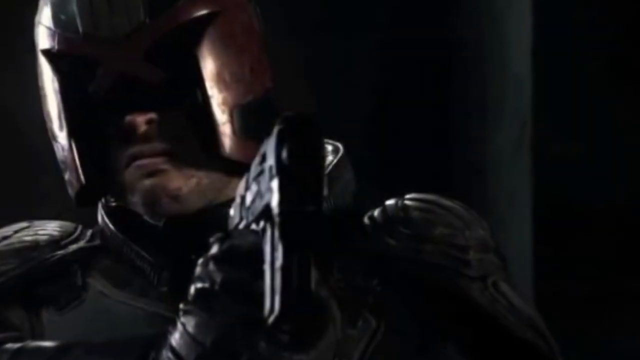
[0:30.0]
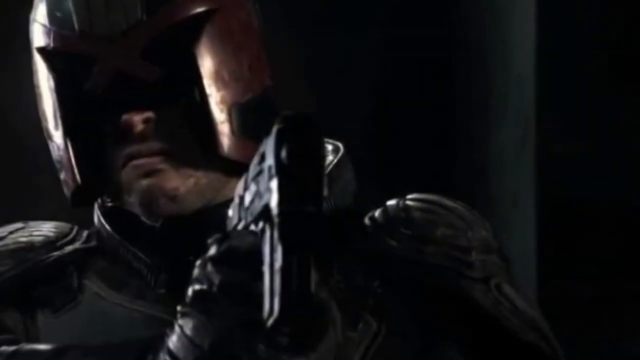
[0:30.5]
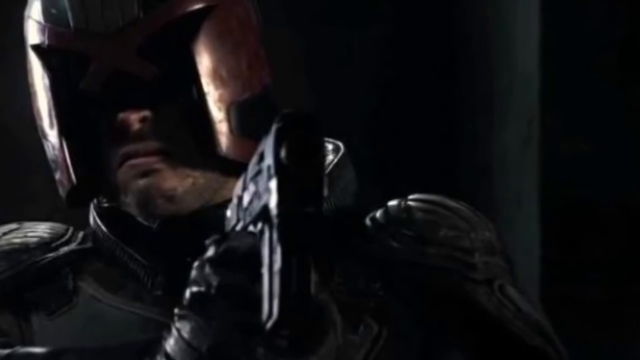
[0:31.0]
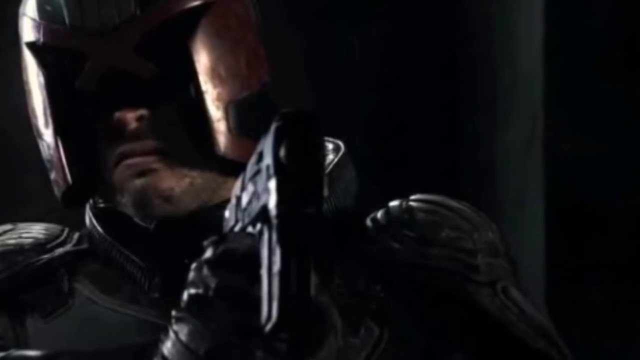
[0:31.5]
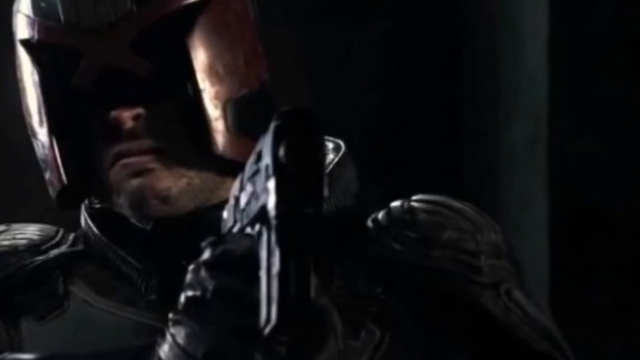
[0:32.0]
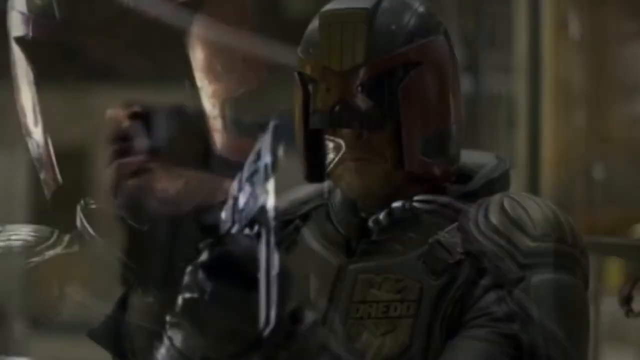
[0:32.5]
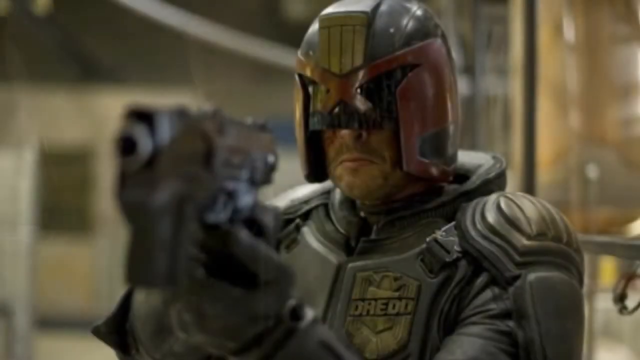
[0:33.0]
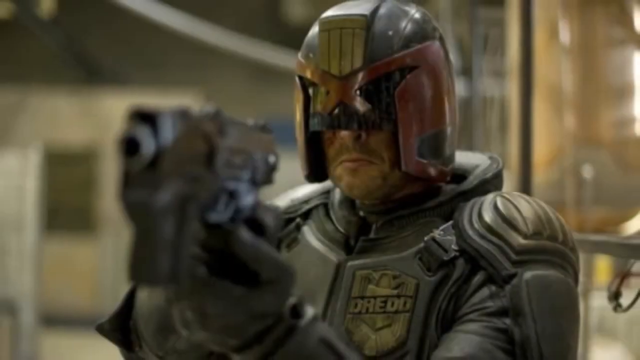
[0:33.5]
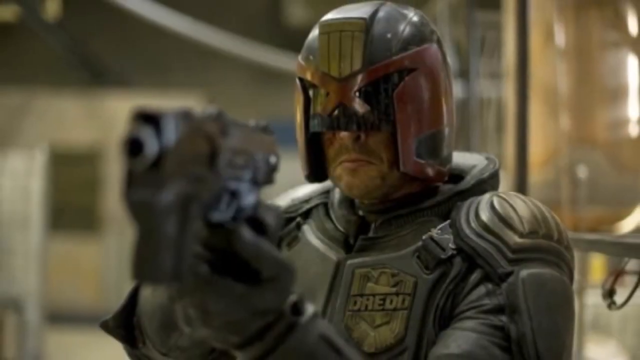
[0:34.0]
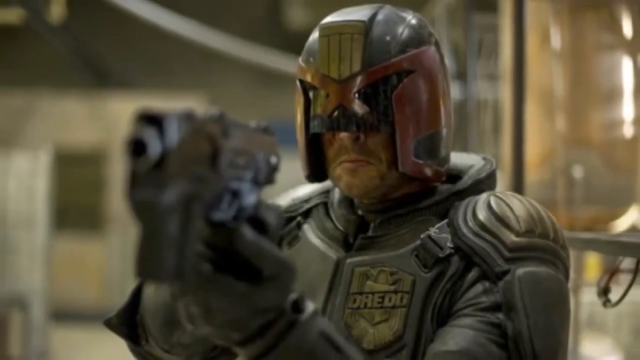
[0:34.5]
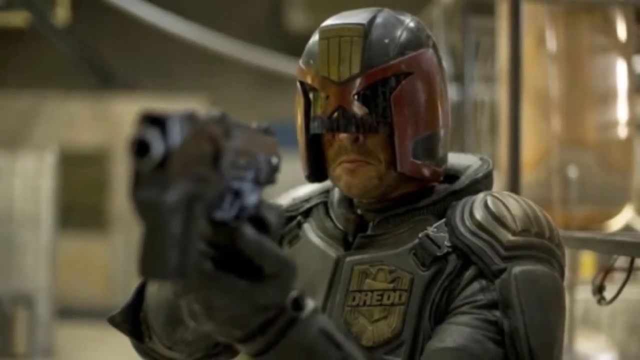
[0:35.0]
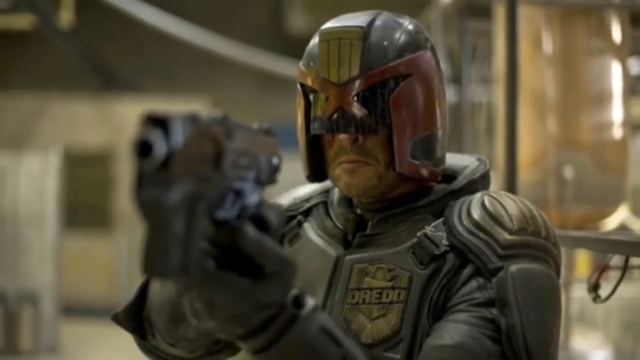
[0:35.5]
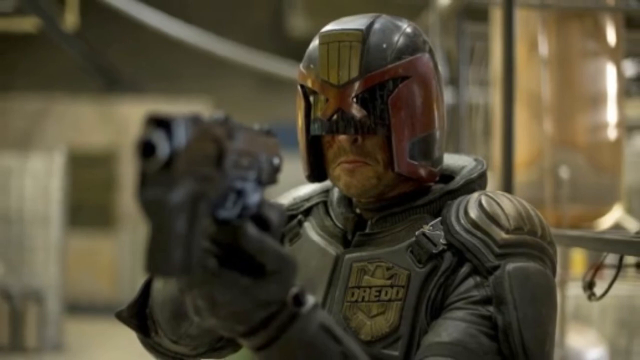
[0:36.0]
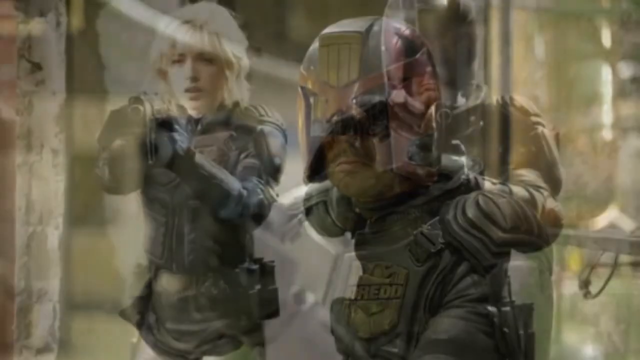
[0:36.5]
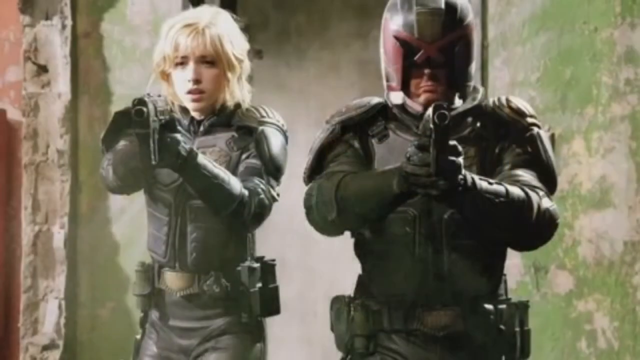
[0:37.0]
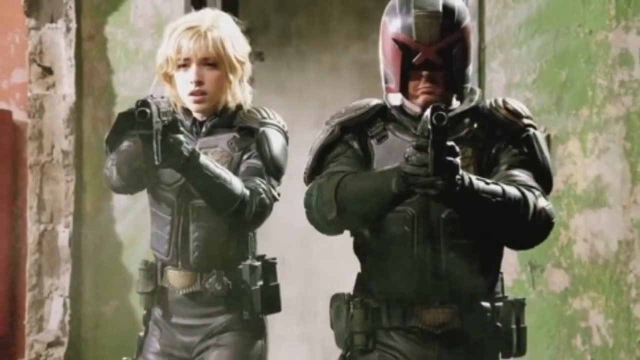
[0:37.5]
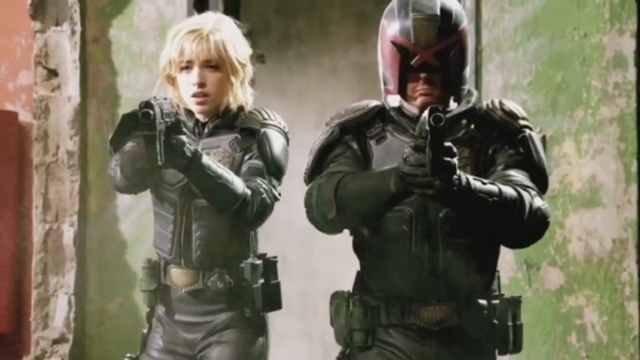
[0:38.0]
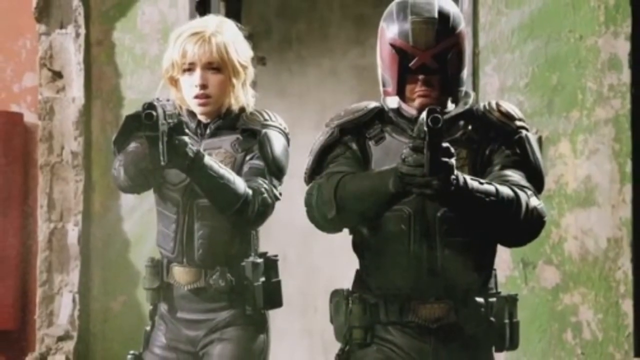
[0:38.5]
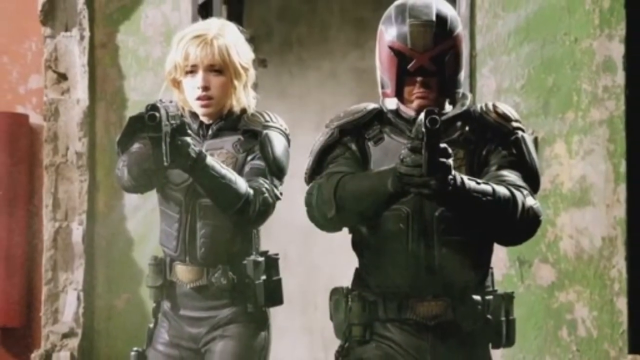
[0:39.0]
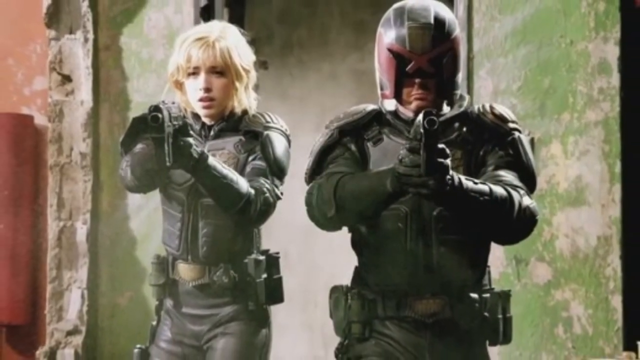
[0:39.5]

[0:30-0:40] Images show the man in a movie costume, with a helmet on his face and a gun in his hand. Behind him is a woman in the same costume, and the two appear to be going together to attack enemies. The images, from either a movie or a game, show the man and the woman holding guns, probably about to attack an enemy.